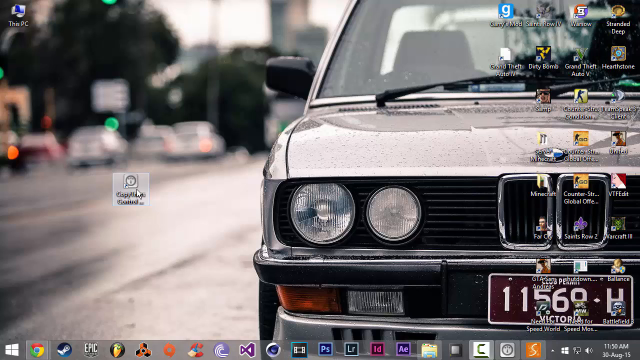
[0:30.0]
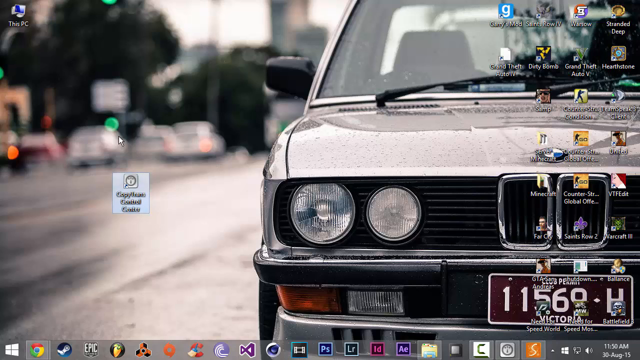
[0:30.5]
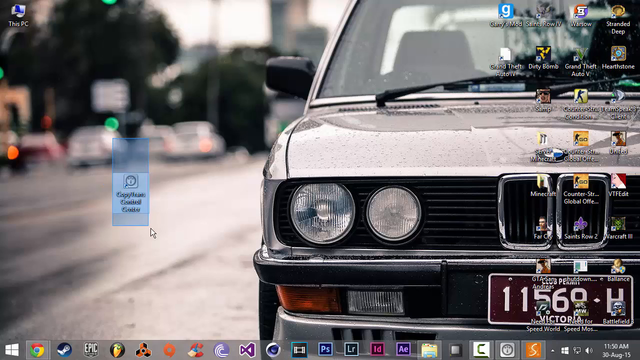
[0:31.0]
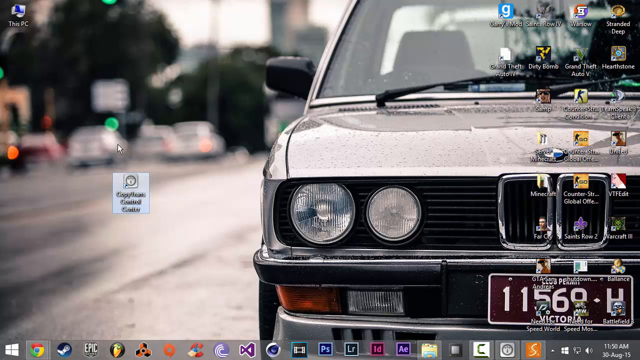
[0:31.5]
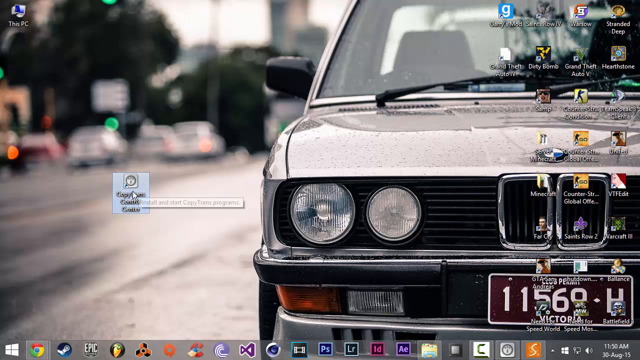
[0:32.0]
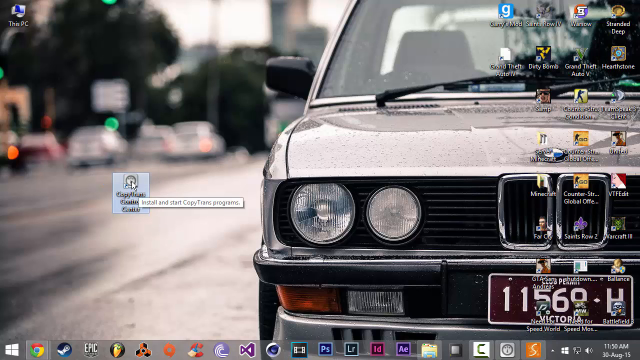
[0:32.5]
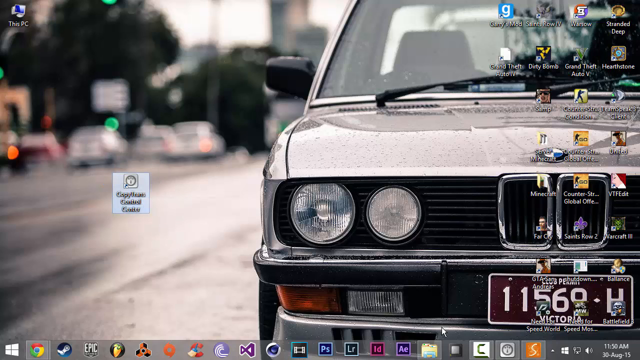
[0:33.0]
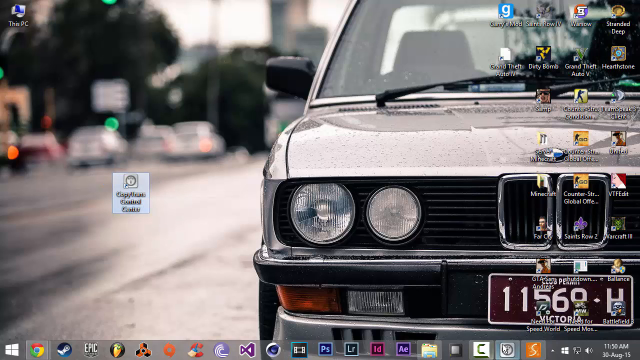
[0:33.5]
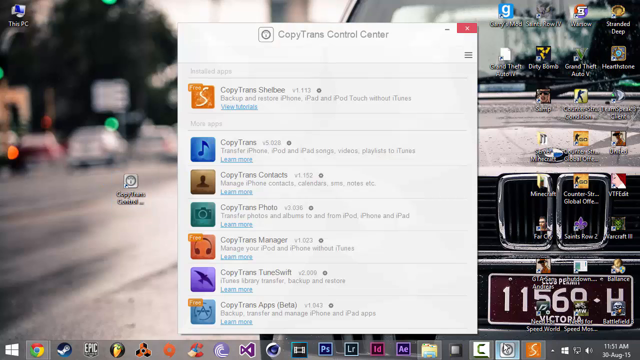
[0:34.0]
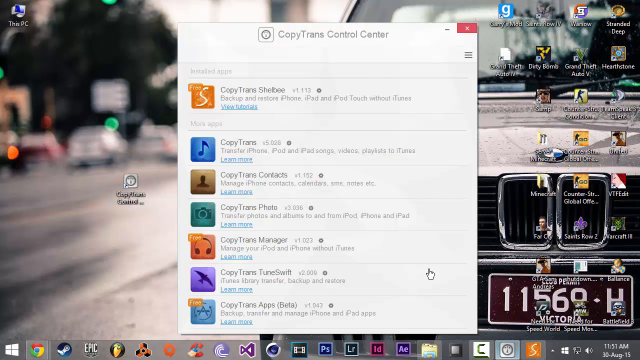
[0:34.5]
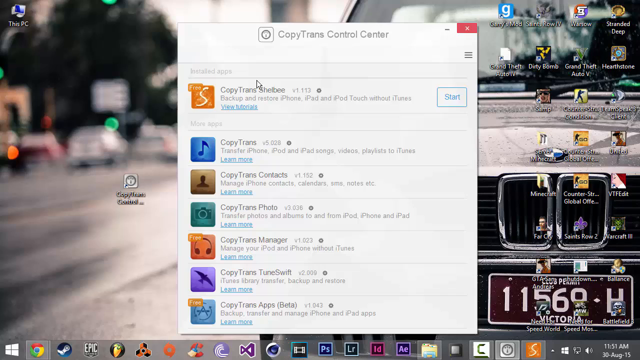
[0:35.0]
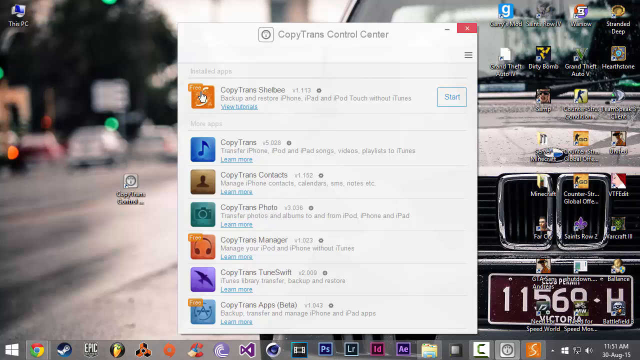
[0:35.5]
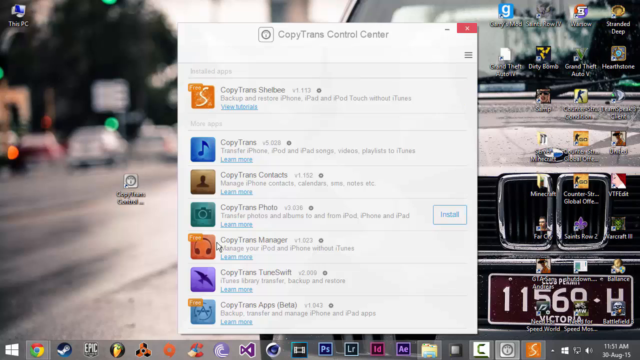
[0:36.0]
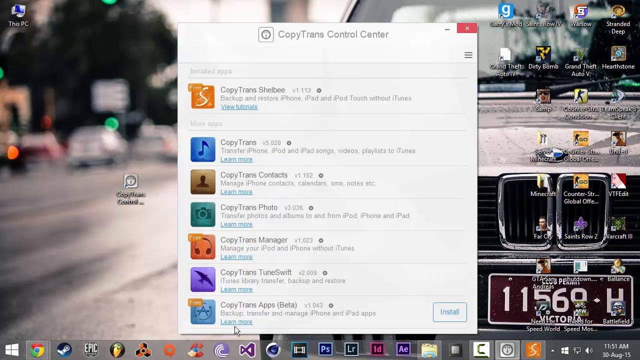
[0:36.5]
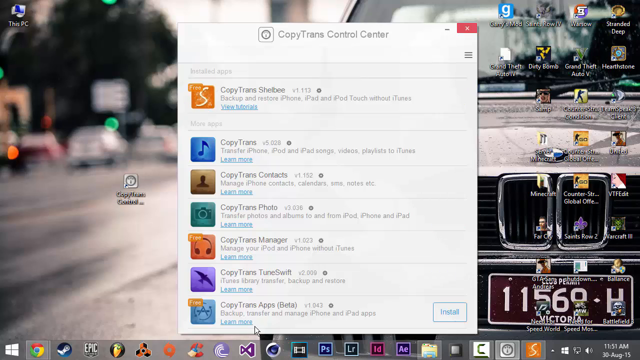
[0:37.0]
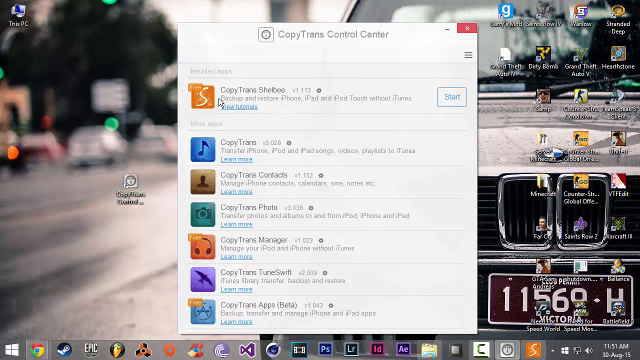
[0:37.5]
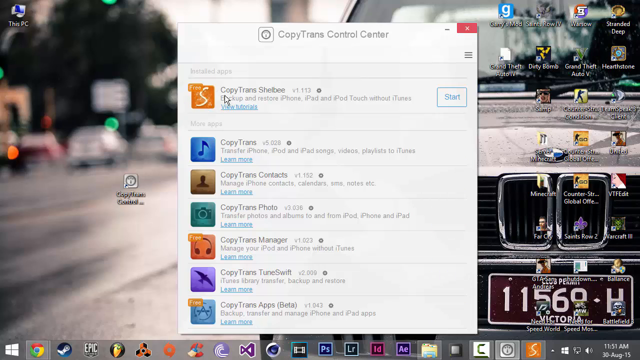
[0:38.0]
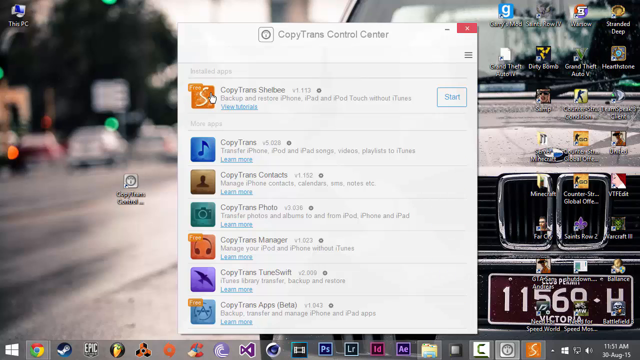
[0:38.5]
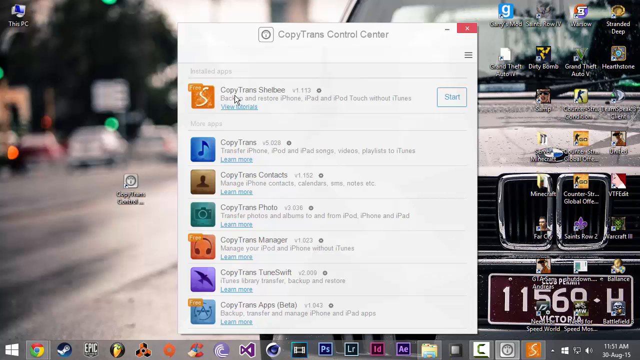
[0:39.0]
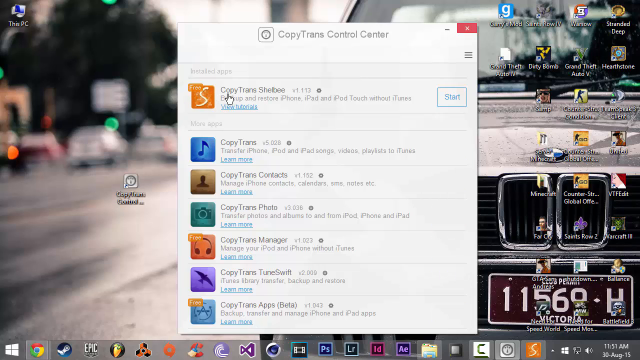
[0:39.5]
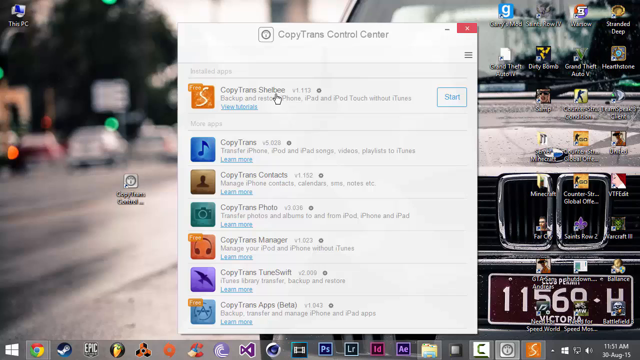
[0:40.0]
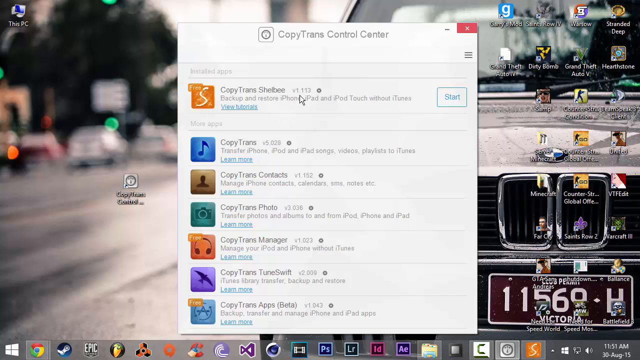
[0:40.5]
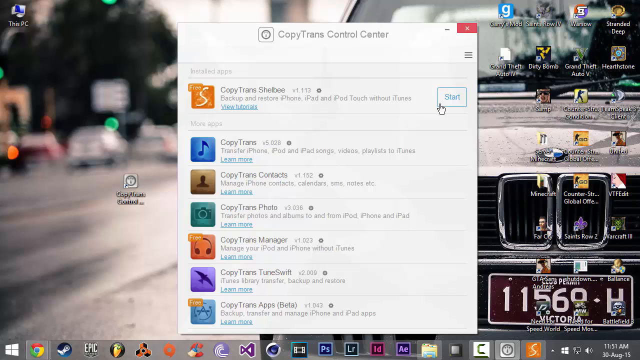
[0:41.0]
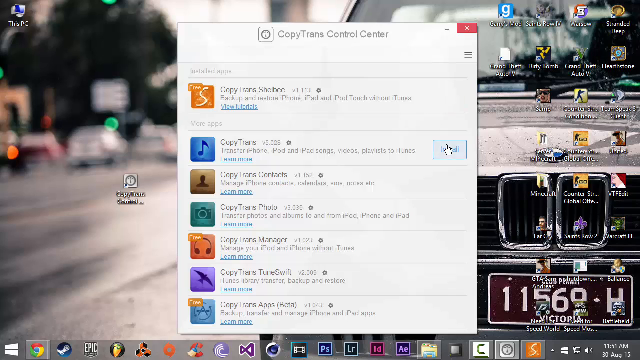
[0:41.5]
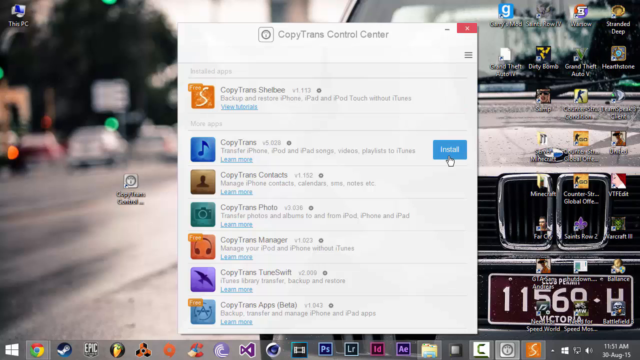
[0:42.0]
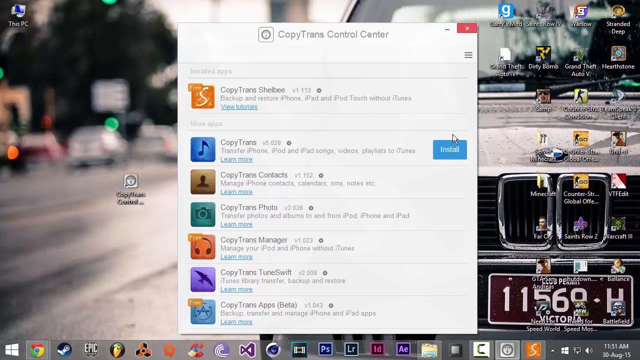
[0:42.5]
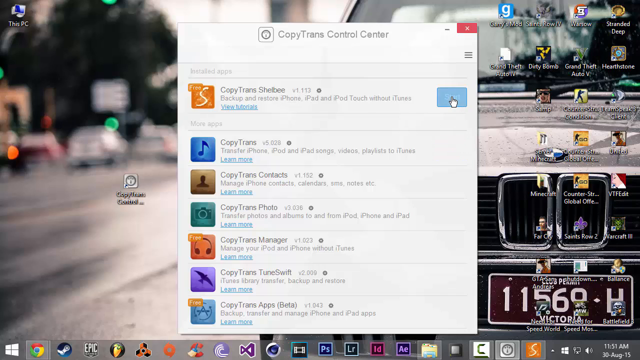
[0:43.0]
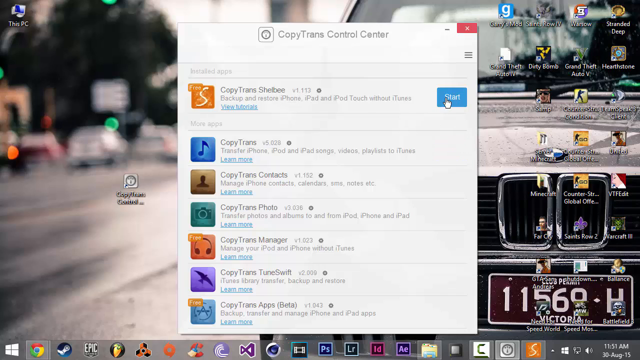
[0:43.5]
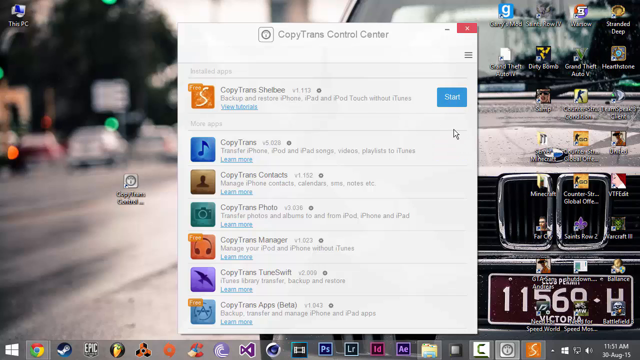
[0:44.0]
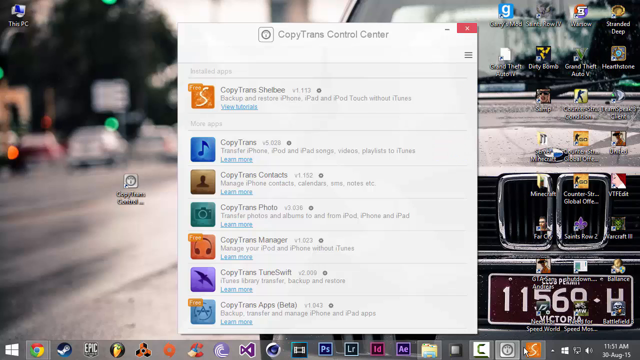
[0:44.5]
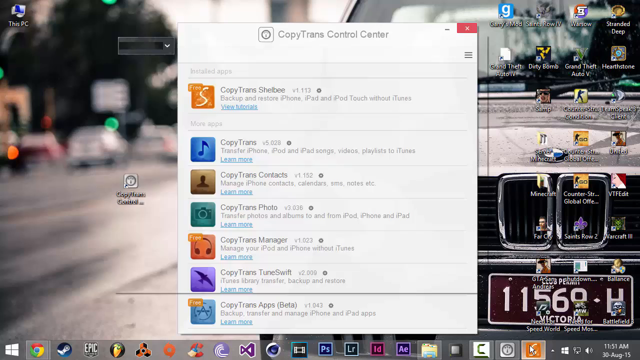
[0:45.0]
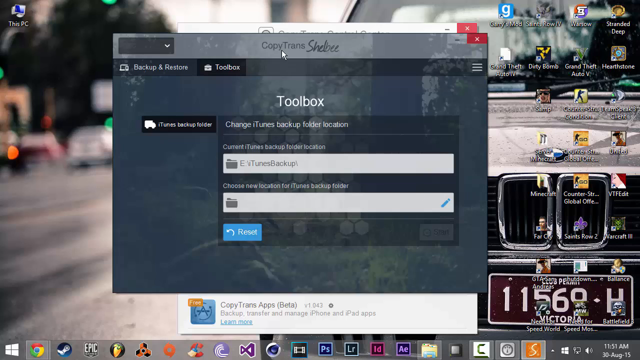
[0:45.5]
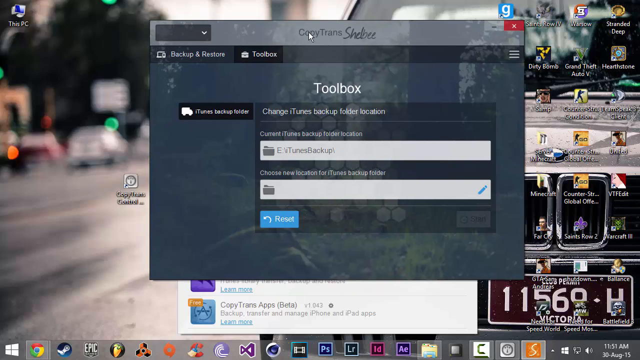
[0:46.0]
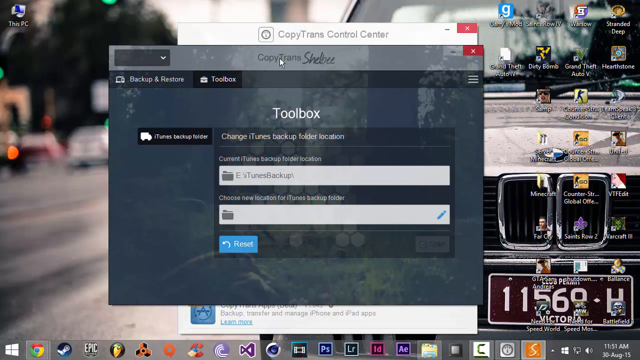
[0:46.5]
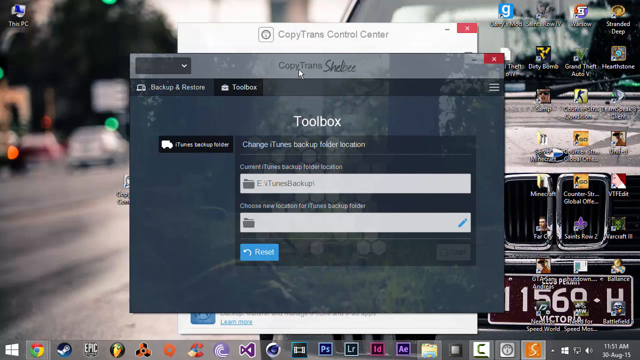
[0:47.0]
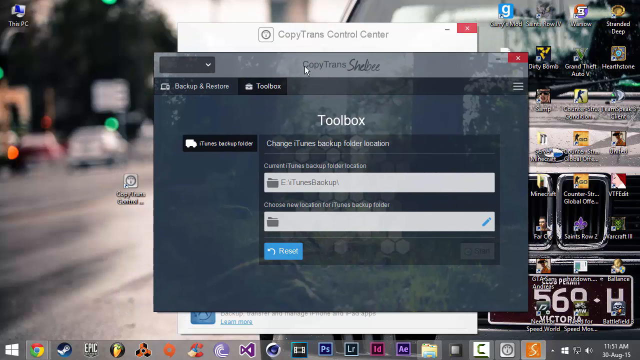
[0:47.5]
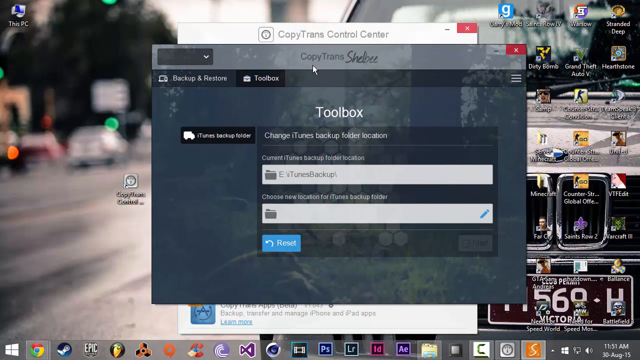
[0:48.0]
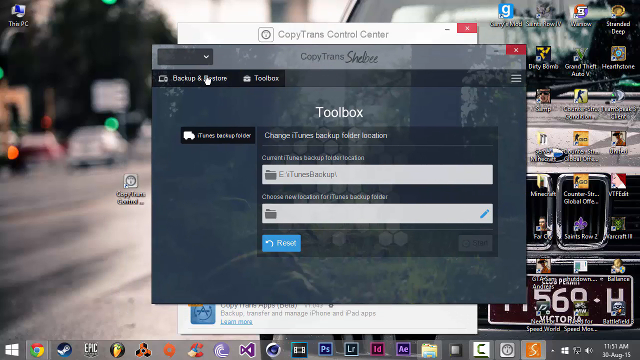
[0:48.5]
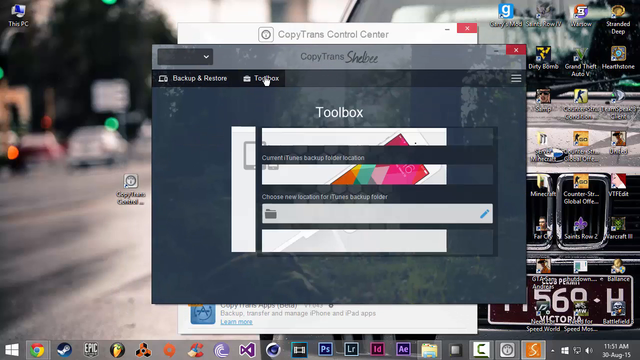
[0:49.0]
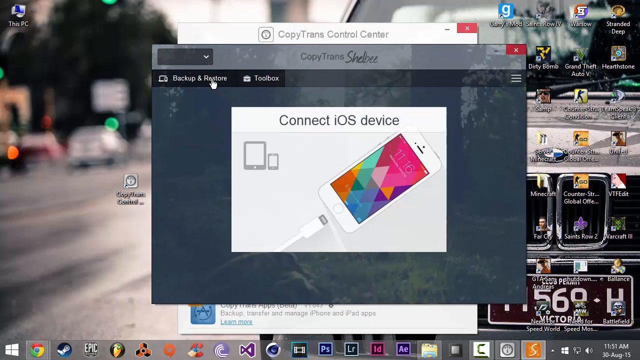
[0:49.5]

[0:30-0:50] The home screen of a computer shows a kind of isolated icon on the left. The wallpaper shows a street with a gray Mercedes that looks old parked on the side, and the street looks wet. The user seems to highlight the isolated icon on the left with the cursor, and a window appears with a whole bunch of options. The header of the window says "copy trans control center", and the options have many different icons in different colors. The first icon is orange and says "copy trans Shelby"; to the right of it is a button the person hovers the cursor over, and it says "start" when hovered. Another window then appears that says "toolbox" in white text.